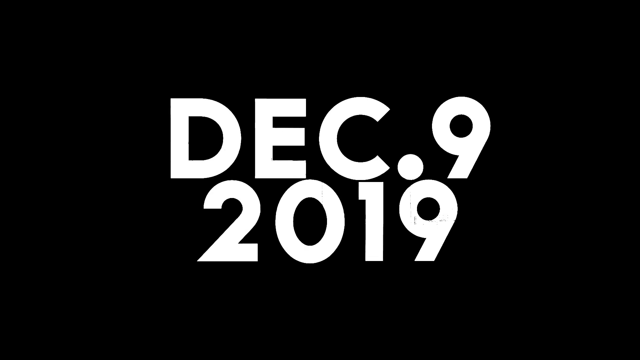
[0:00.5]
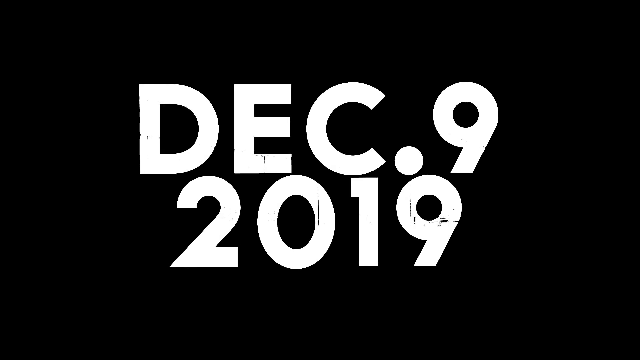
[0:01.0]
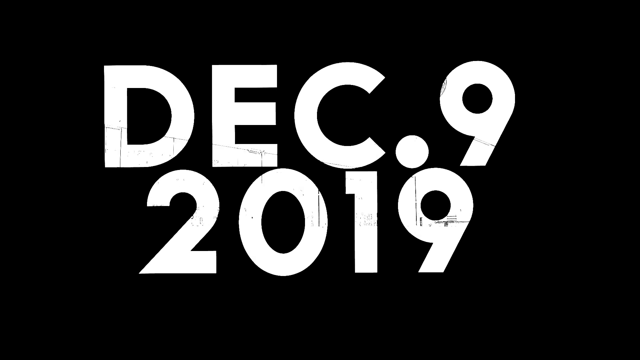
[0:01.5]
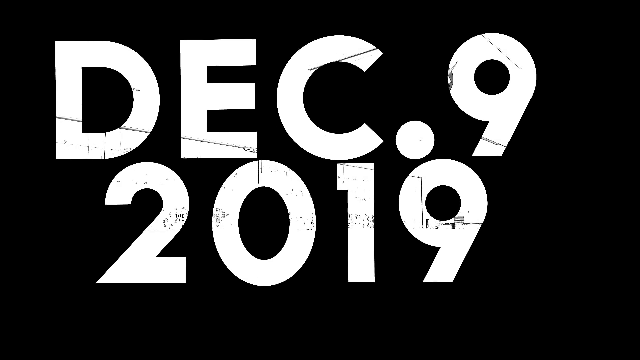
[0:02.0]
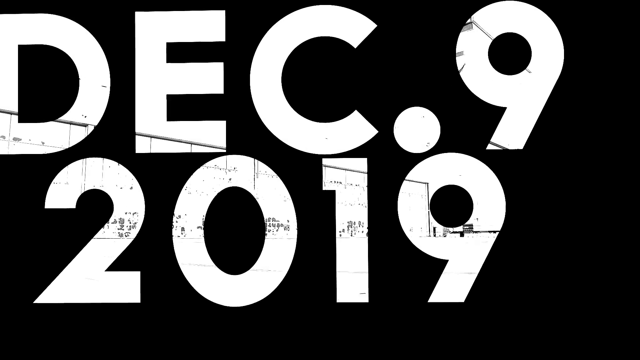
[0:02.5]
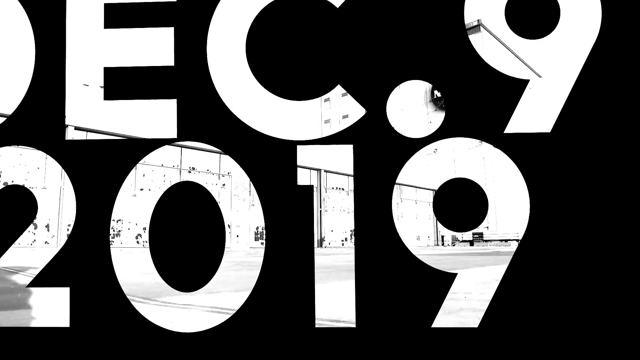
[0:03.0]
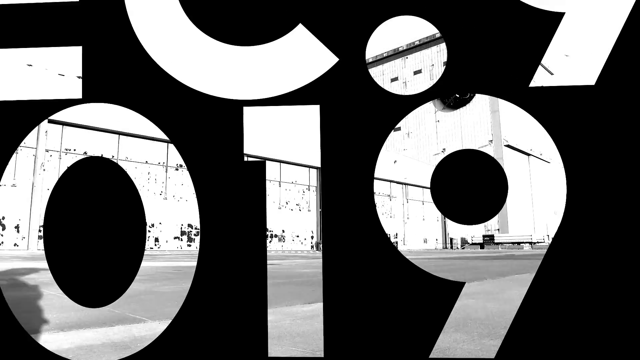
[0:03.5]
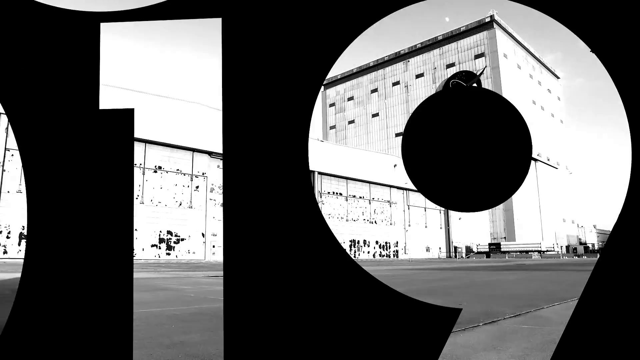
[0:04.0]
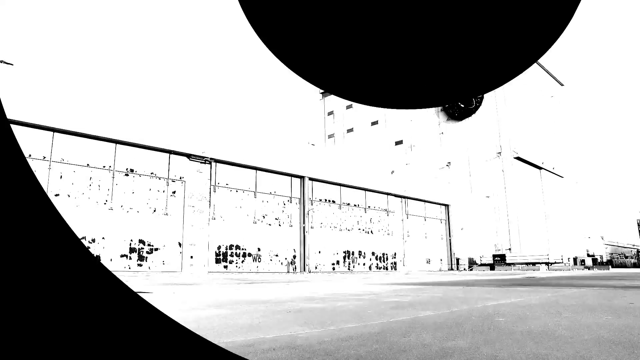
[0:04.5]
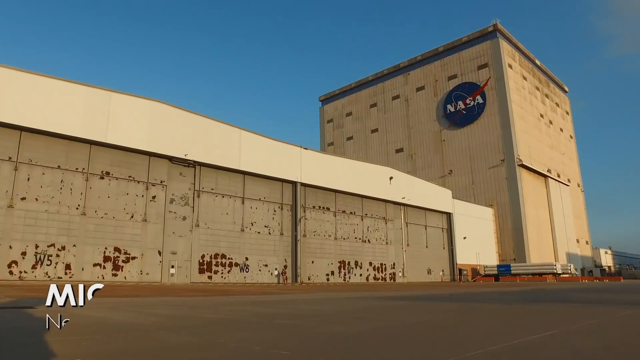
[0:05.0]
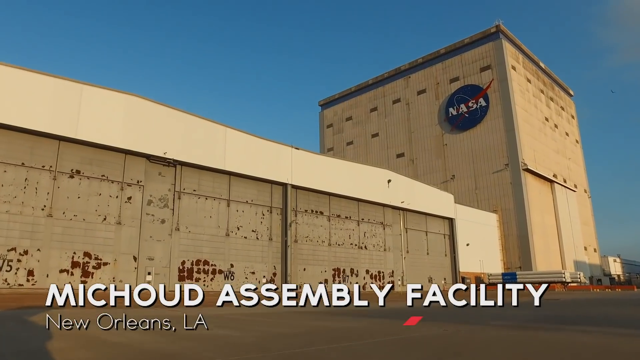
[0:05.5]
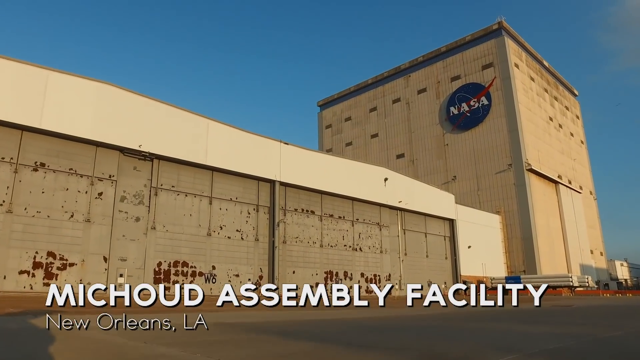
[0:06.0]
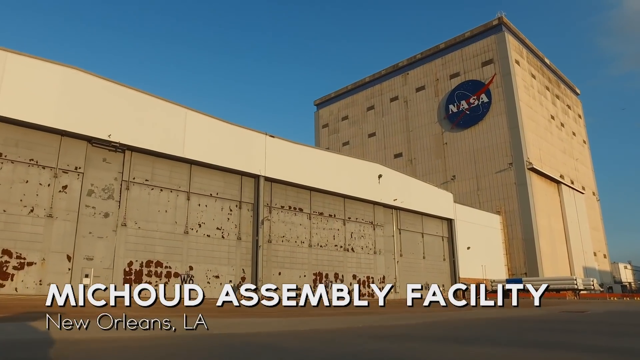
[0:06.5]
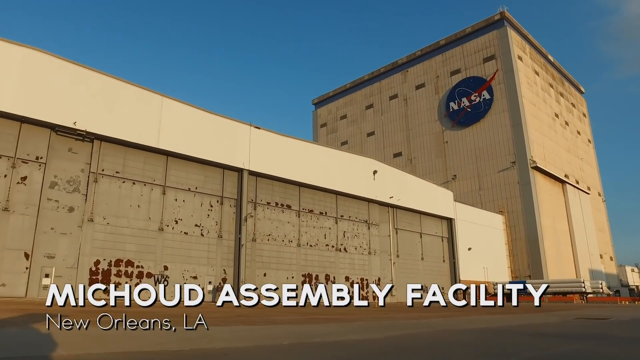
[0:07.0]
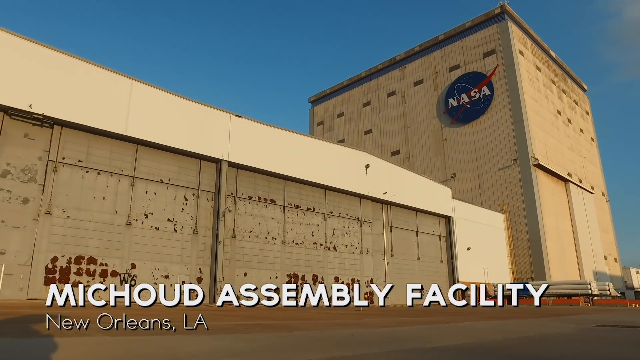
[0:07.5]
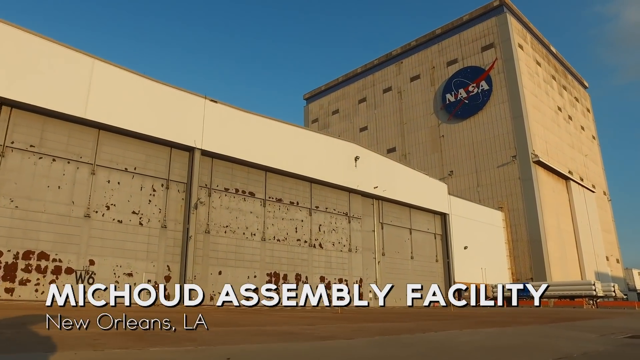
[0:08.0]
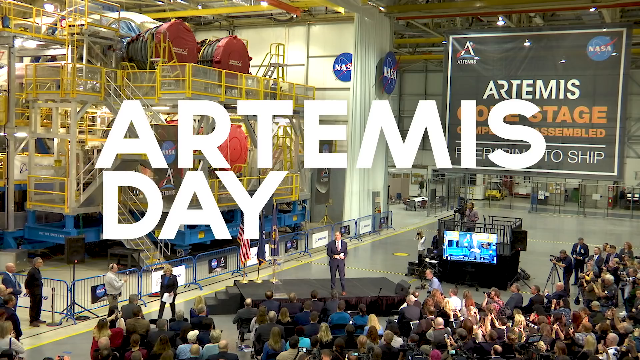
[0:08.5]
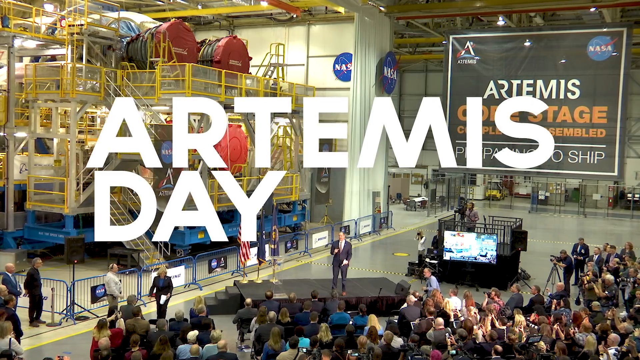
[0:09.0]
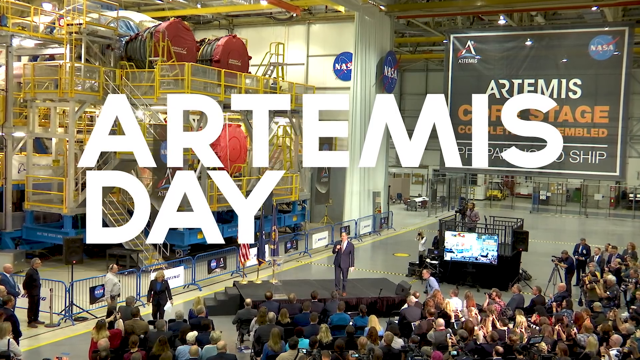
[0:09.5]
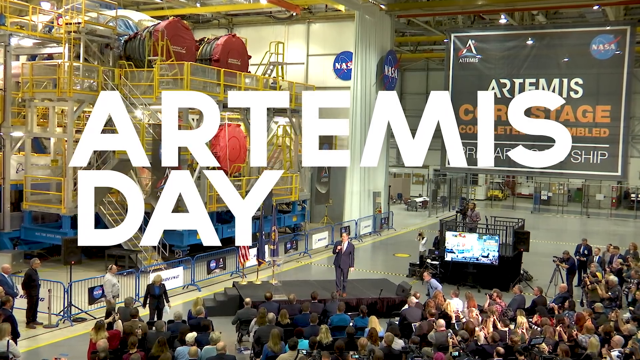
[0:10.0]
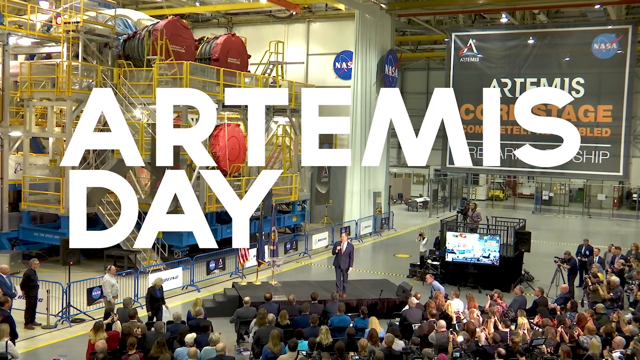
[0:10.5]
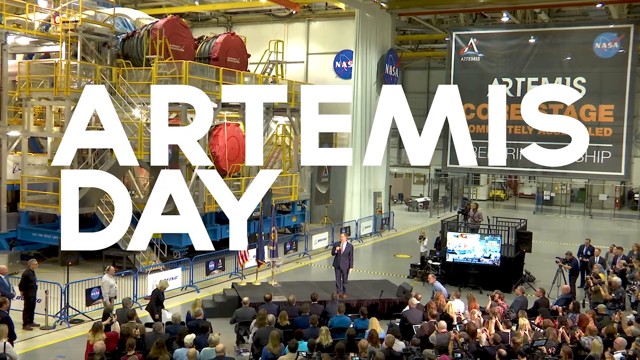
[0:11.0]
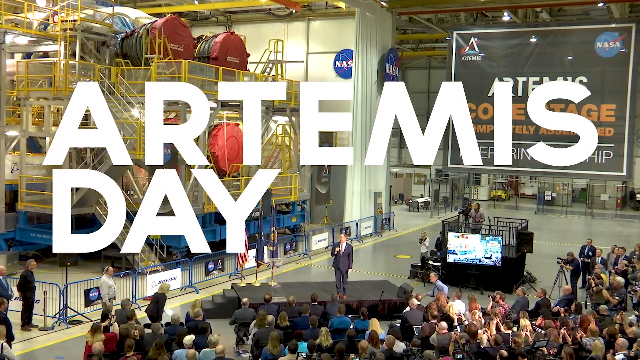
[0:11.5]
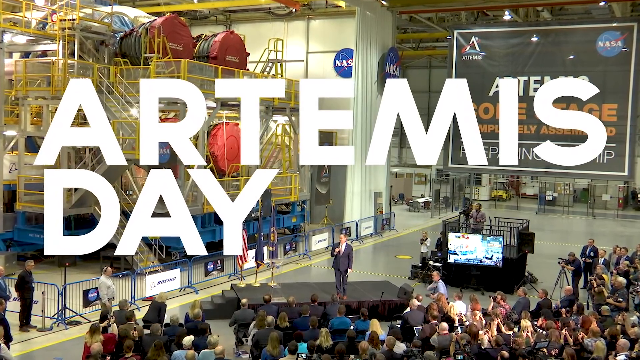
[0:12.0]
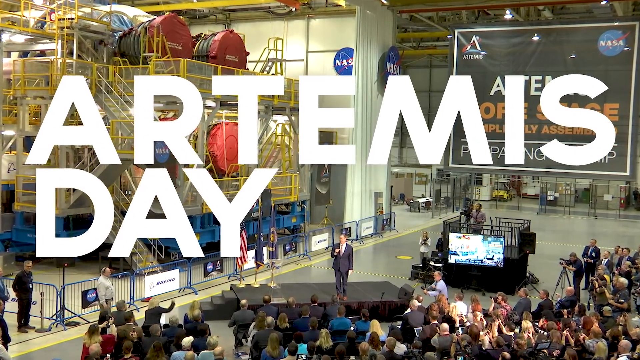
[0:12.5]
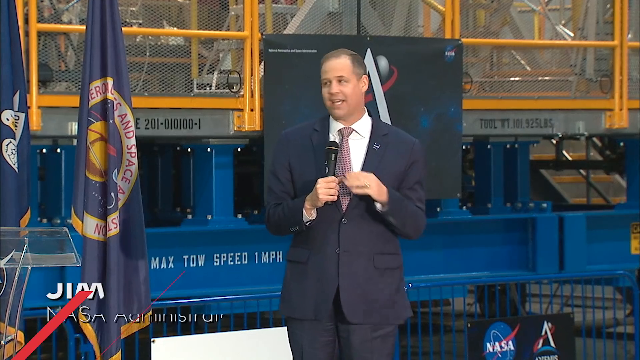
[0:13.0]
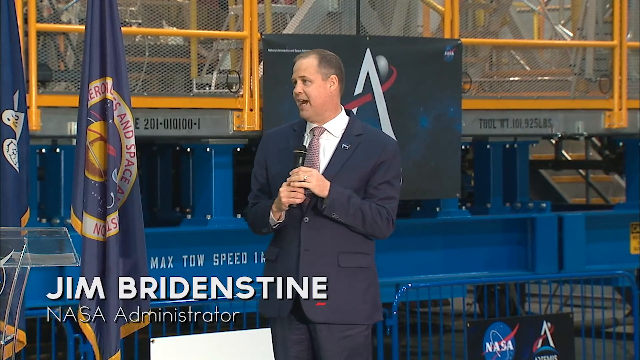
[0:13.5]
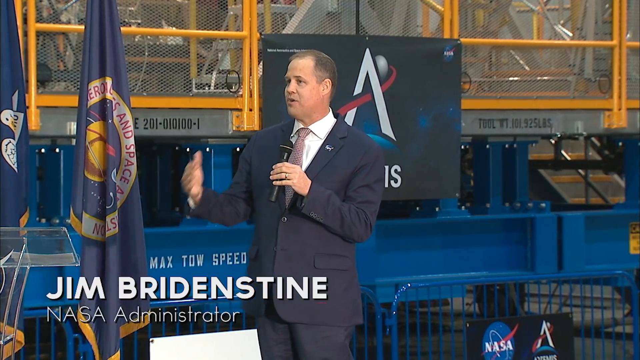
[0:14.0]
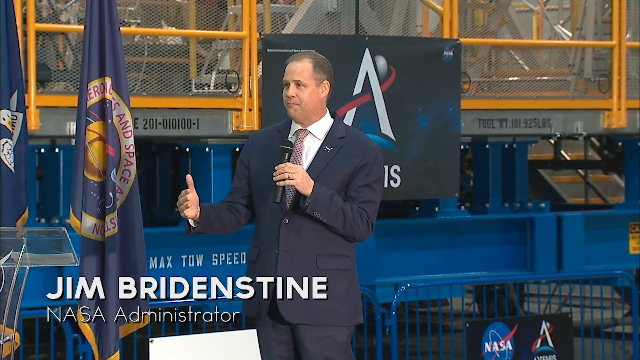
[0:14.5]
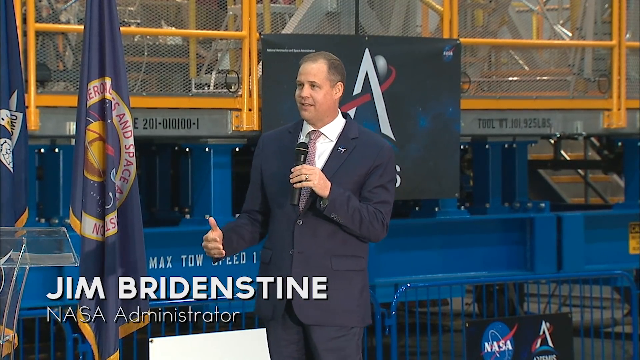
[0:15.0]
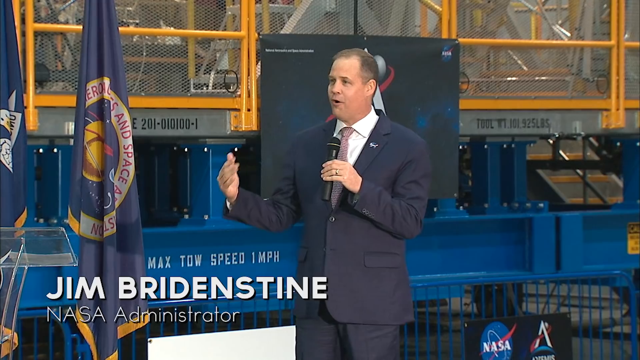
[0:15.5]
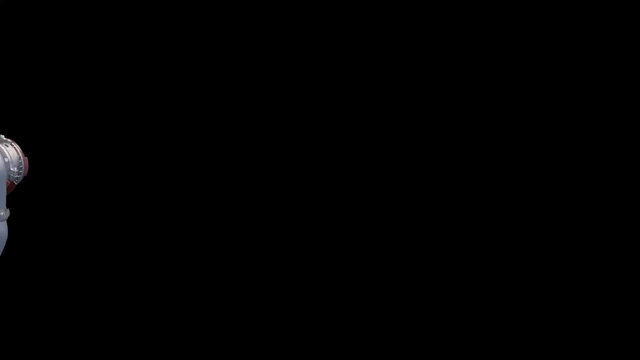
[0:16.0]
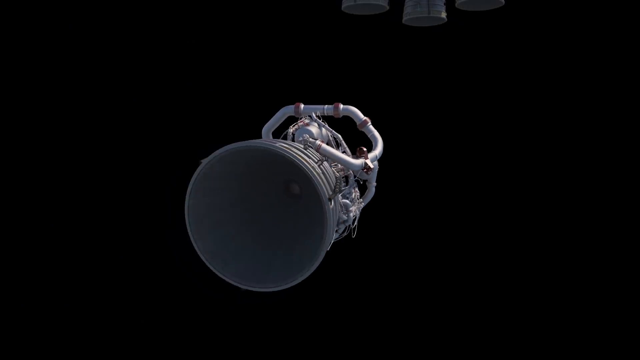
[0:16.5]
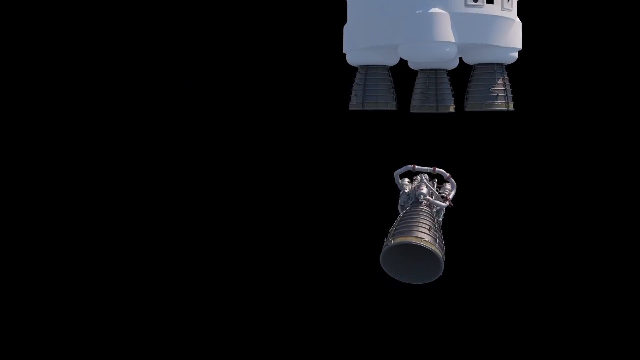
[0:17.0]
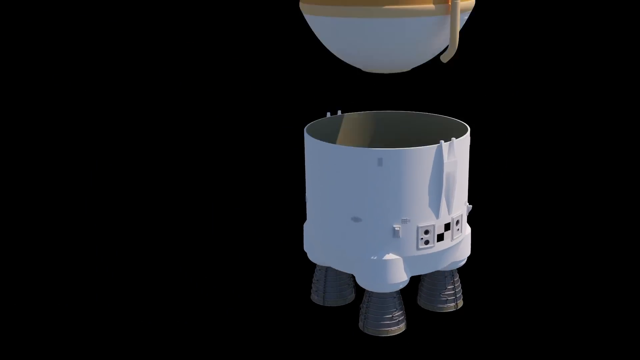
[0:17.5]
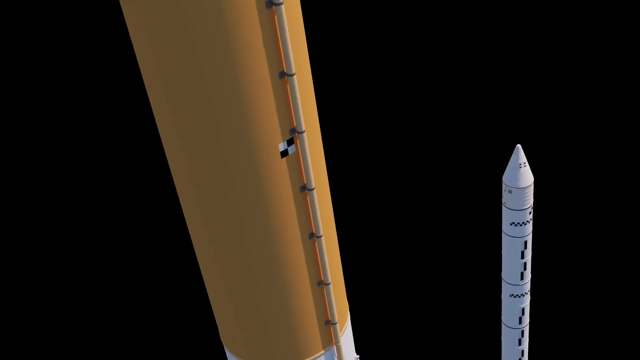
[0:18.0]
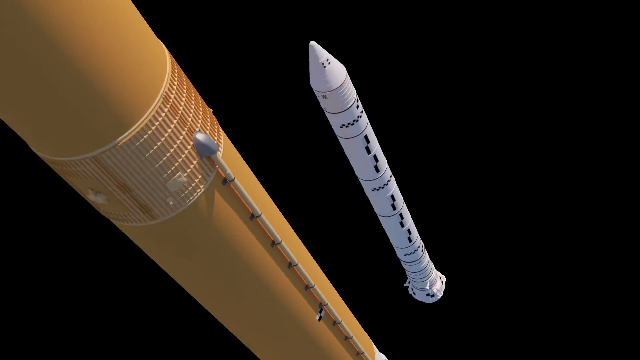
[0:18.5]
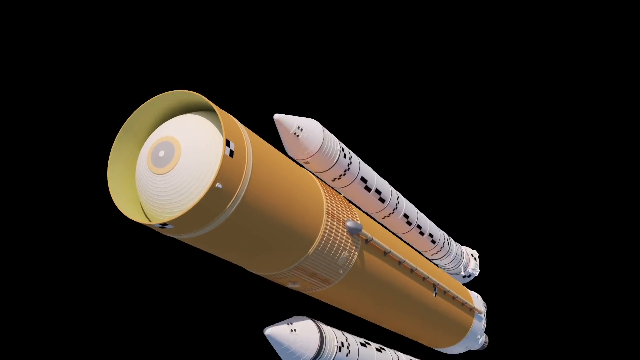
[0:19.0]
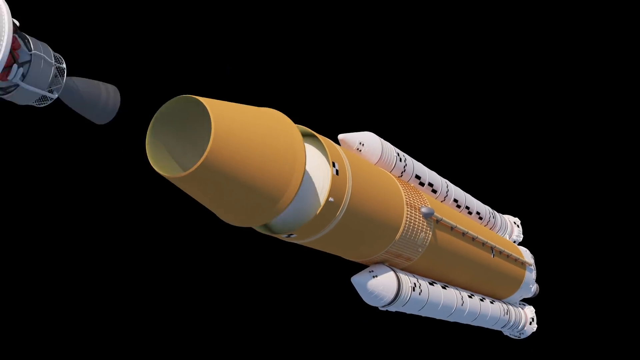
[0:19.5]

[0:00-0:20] The video relates to NASA and carries a date of December 9th, 2019. It shows a NASA building in New Orleans, Louisiana, and the event is called Artemis Day. Jim Bridenstine, a NASA administrator, is on a stage talking to people. He is a white man in a two-piece suit with low-cut, goldish-brownish hair, standing on the stage as he talks.